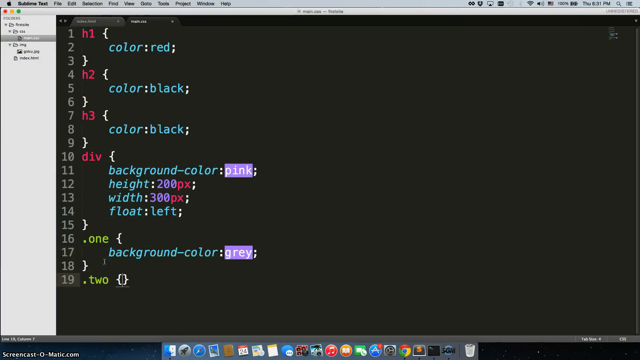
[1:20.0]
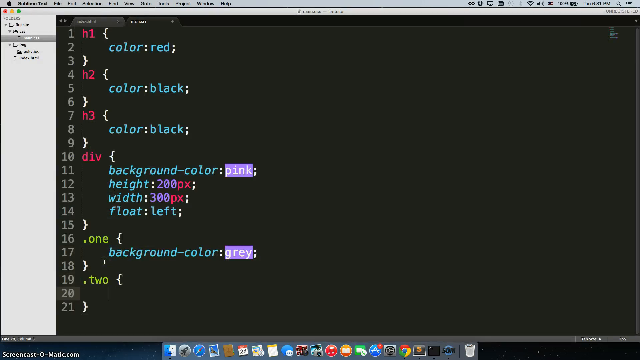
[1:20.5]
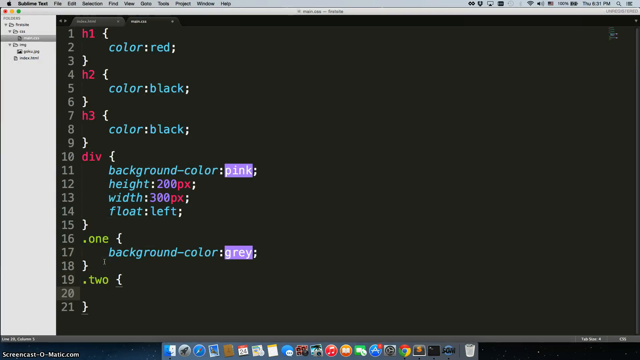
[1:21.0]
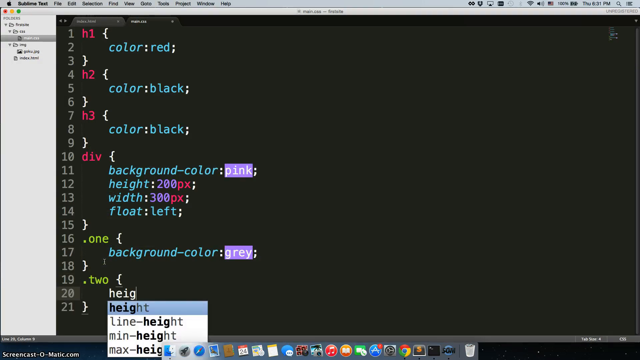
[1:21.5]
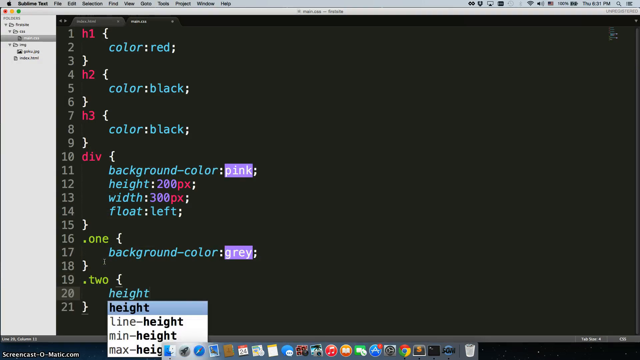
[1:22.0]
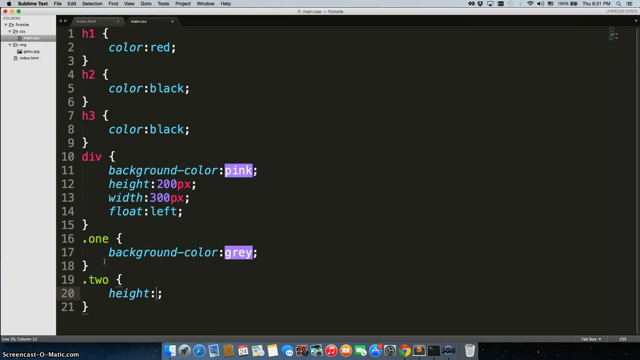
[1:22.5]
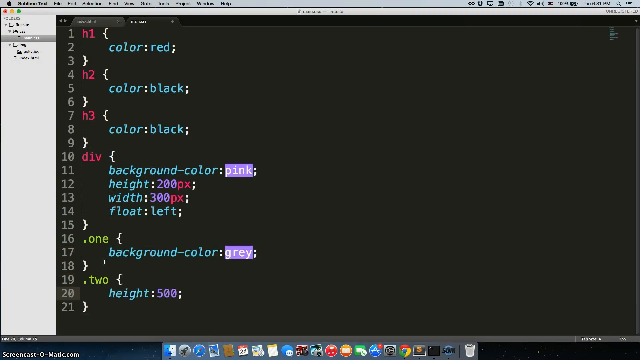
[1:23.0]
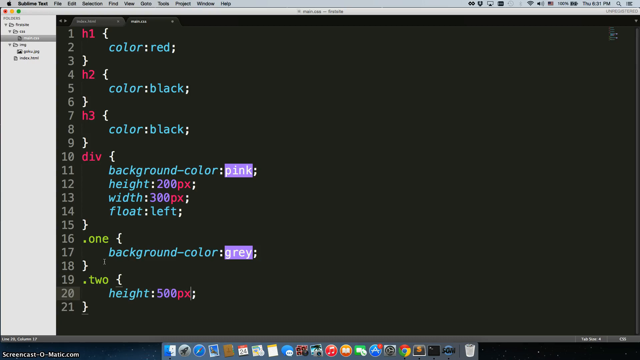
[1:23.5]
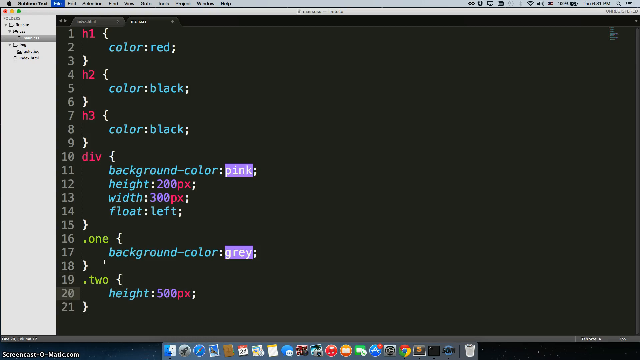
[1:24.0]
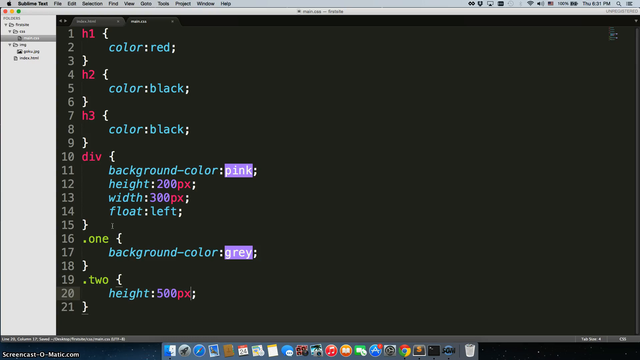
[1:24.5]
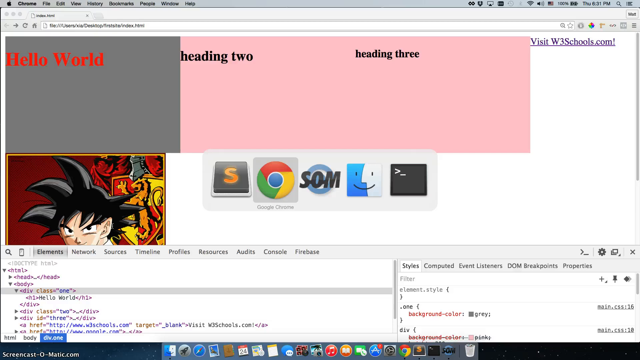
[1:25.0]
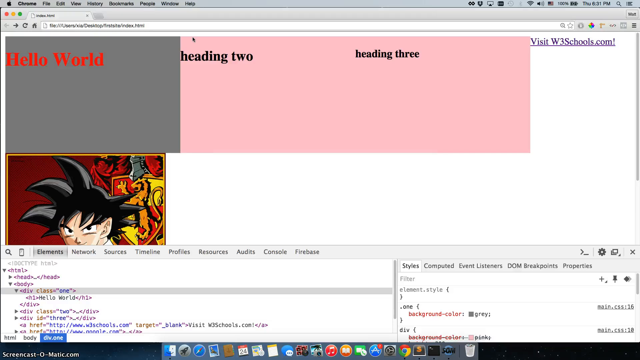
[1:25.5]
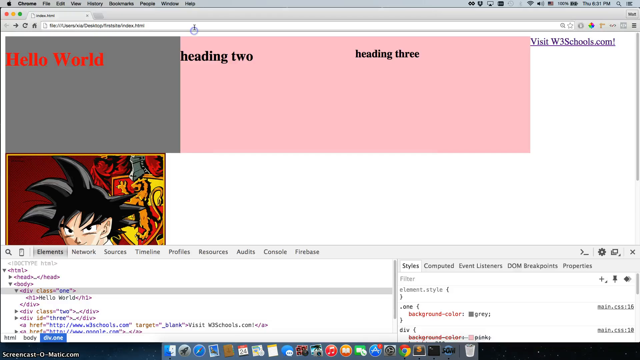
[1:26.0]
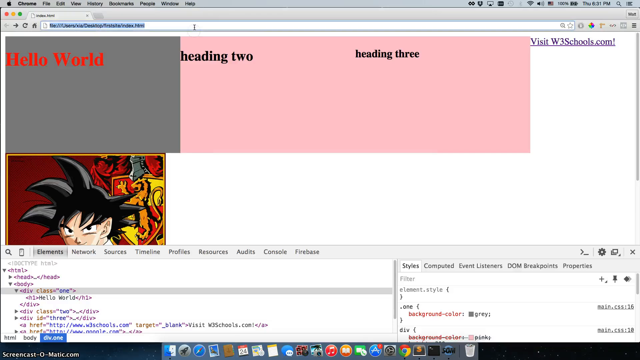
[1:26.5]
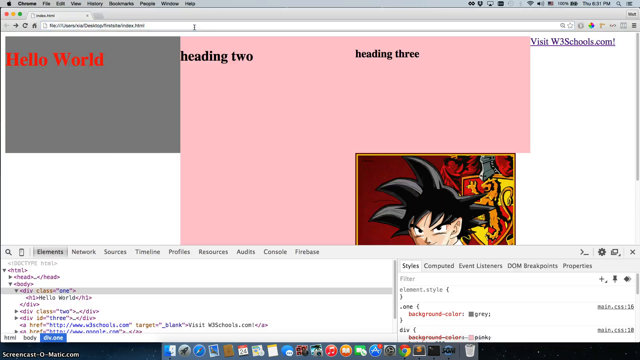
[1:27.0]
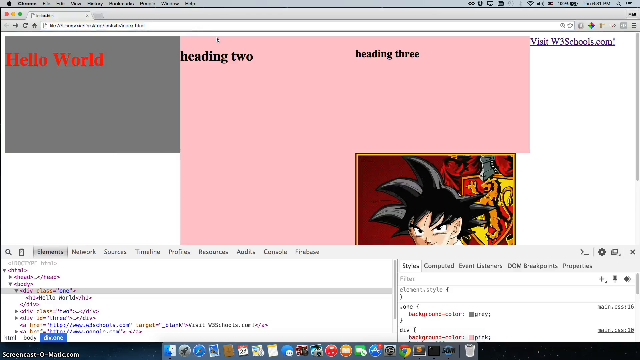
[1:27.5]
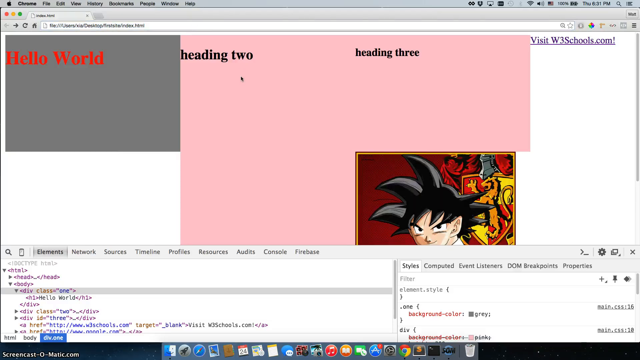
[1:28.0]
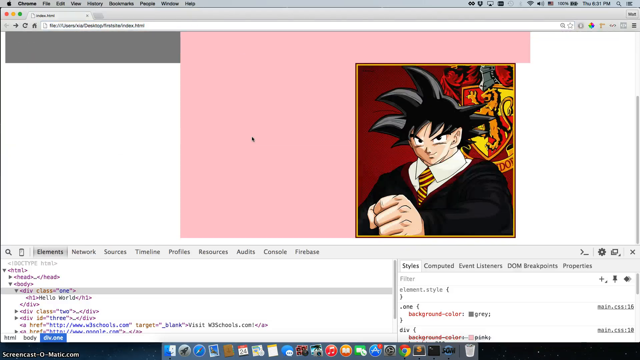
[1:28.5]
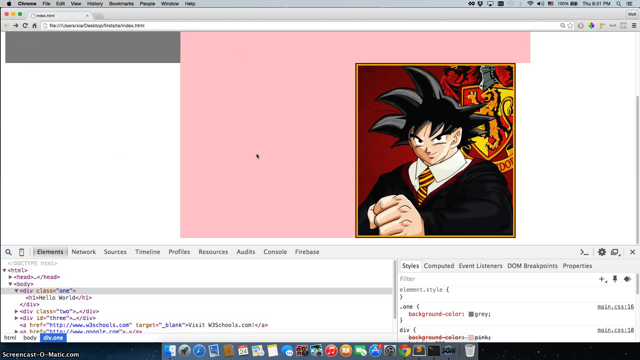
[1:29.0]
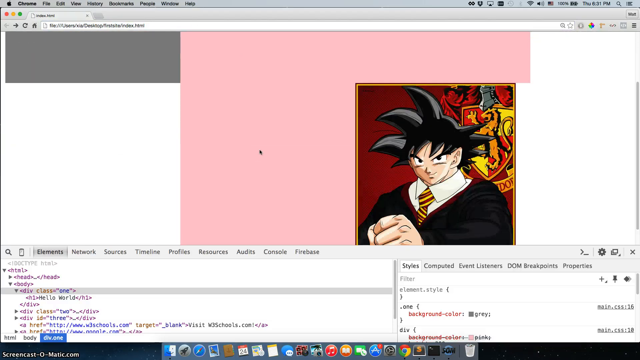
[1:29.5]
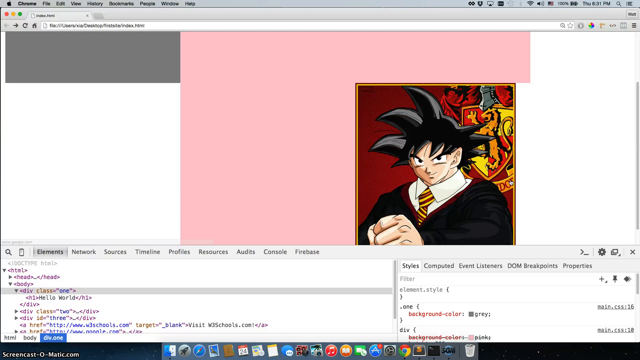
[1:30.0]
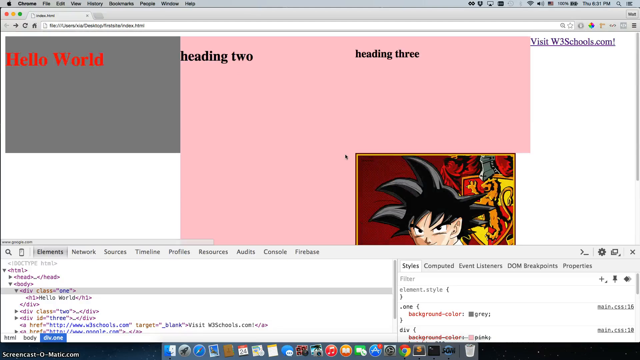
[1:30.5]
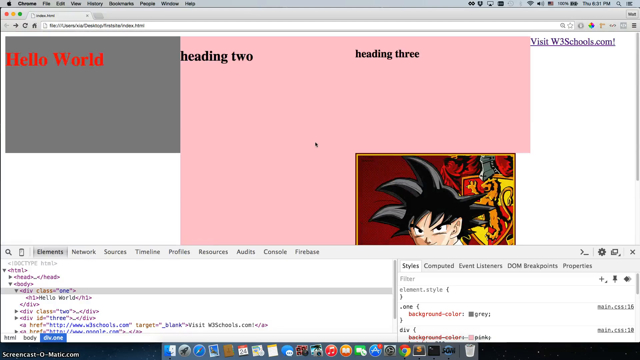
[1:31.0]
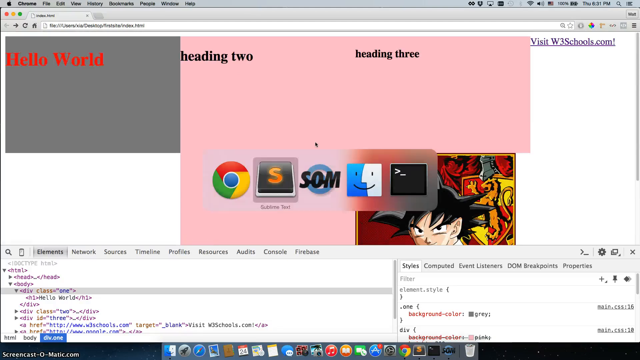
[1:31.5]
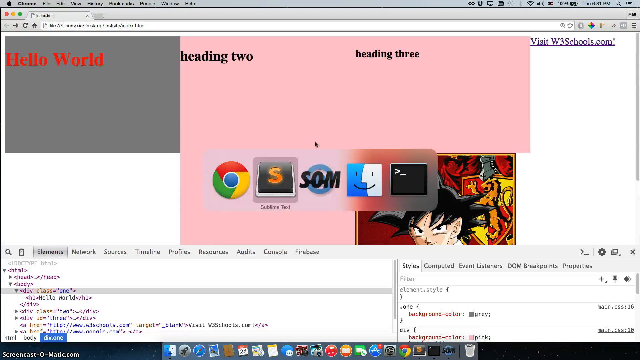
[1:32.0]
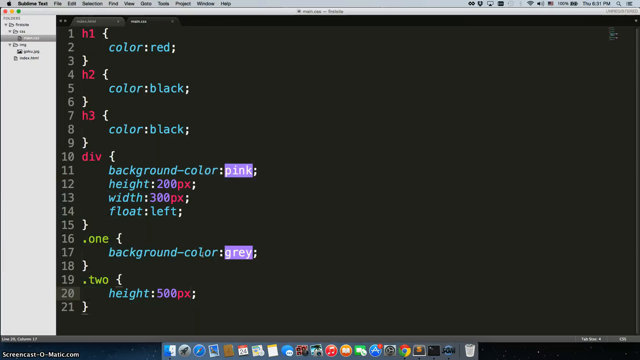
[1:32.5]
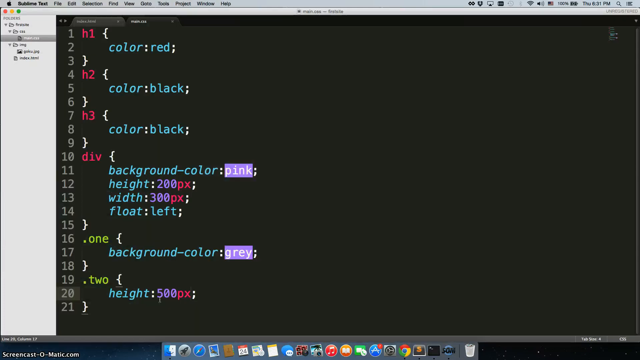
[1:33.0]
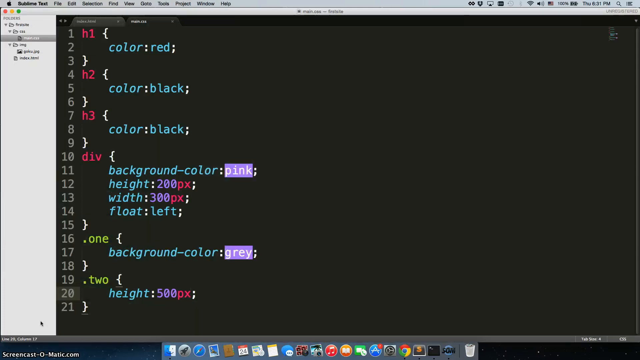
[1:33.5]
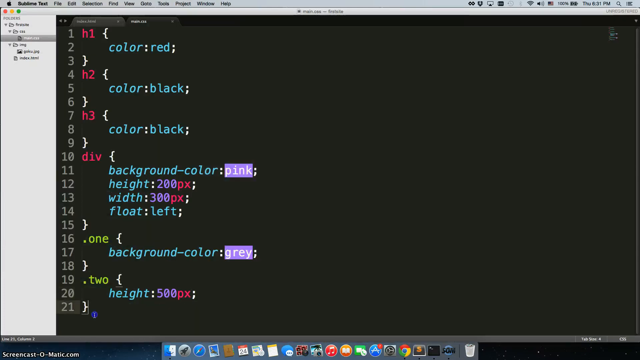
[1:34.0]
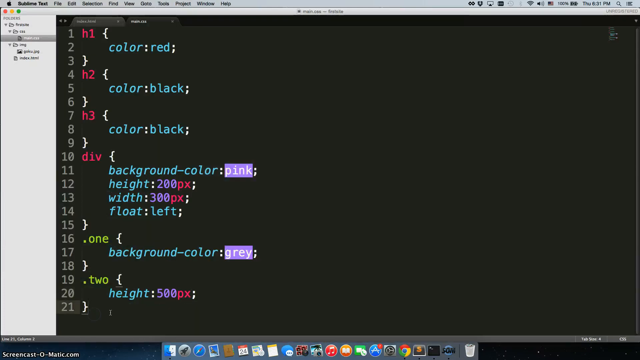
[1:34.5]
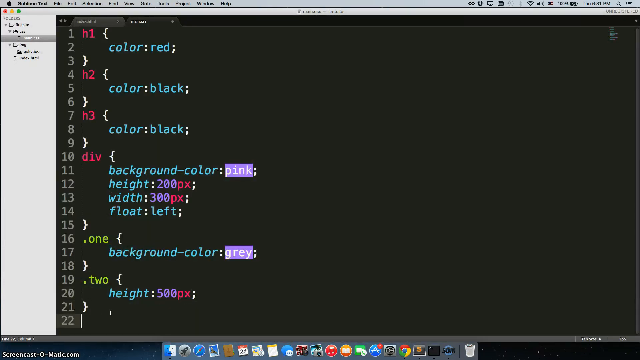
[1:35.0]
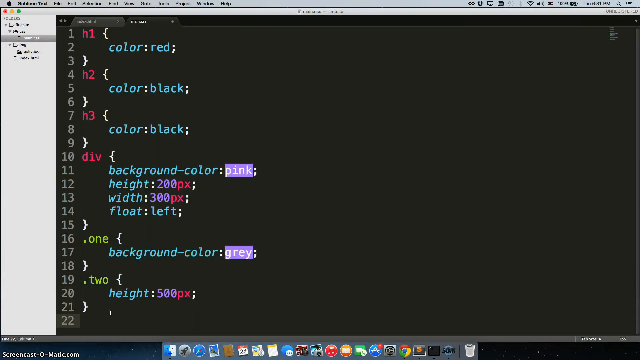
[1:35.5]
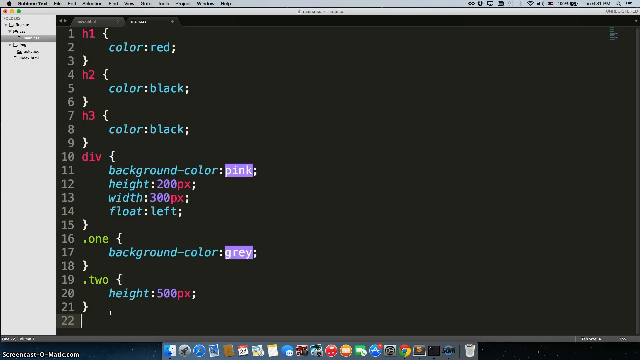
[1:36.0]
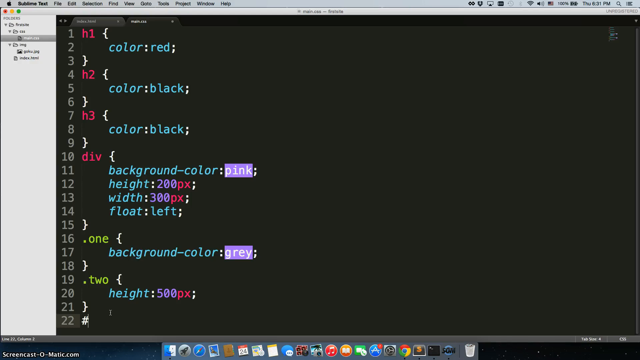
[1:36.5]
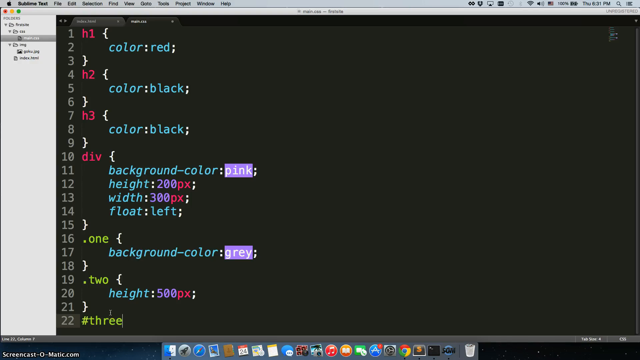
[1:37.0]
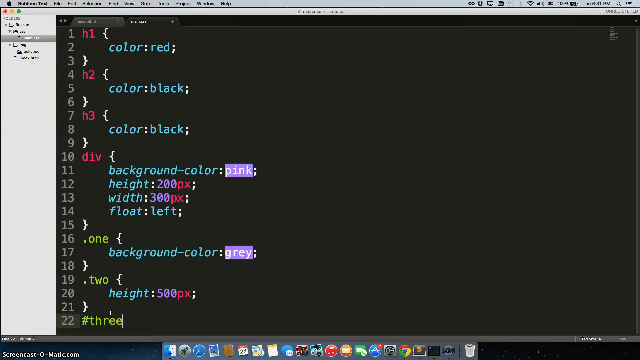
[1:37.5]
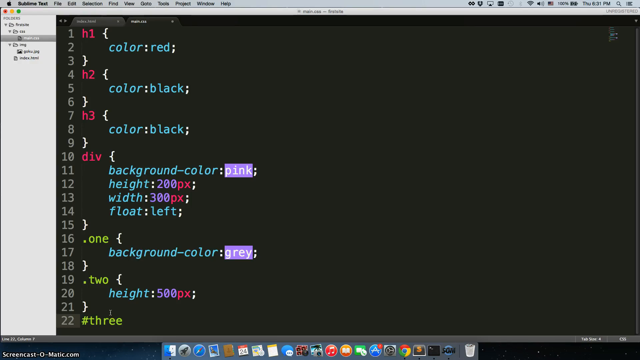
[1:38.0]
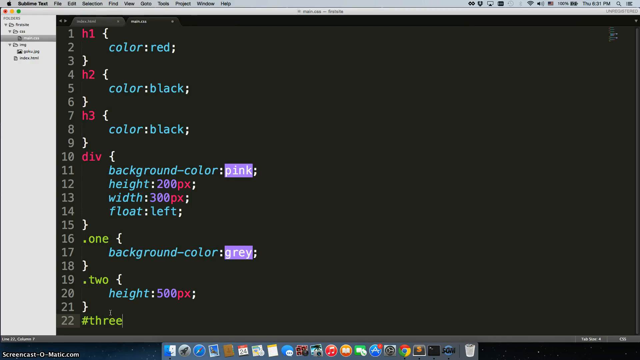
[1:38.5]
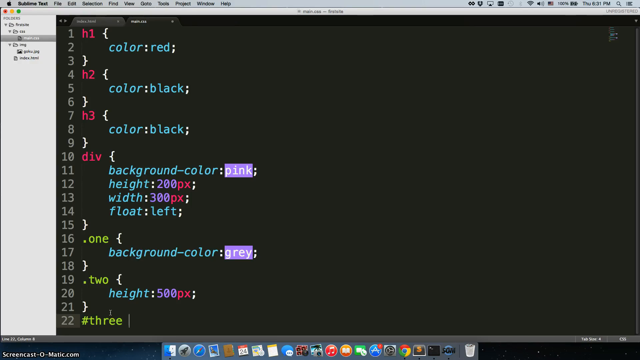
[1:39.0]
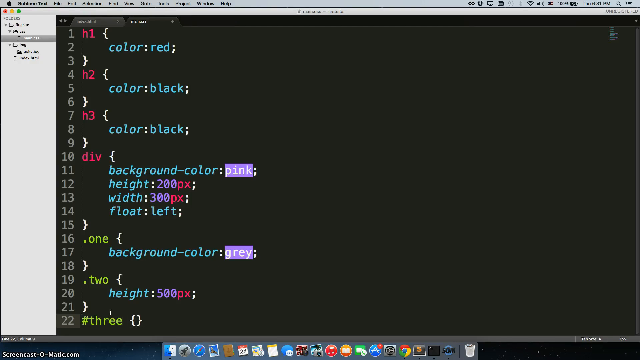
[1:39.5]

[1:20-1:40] "height" is typed, followed by a colon, "500pw" and a colon. The view switches to the Google Chrome window, where the cursor moves and the window is moved up and down. The text pasted into Chrome generates a cartoon character. The Chrome window has different columns with boxes: one with "Hello World", then heading 2 and heading 3. The window scrolls down slightly to show what is kind of a cartoon character generated earlier. The character appears to wear a white shirt with a tie, with black kind of covering the shirt and tie, and its hair looks big with pointed edges. The view then moves back to the coding window, where "#free" is typed with curly brackets.